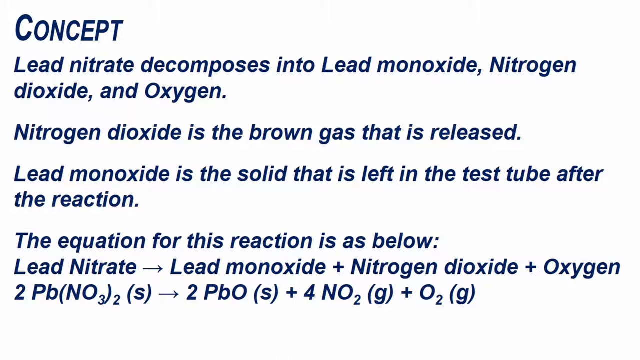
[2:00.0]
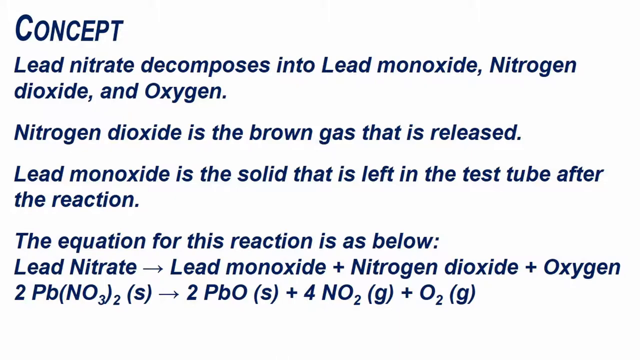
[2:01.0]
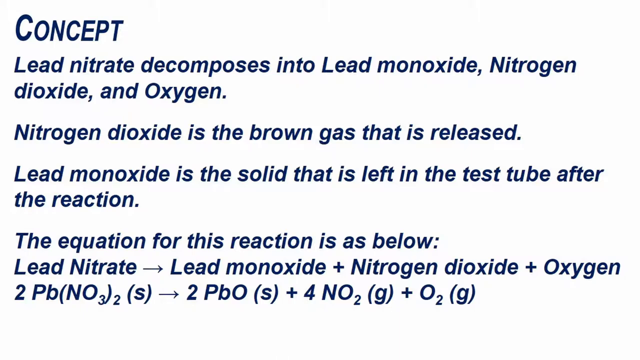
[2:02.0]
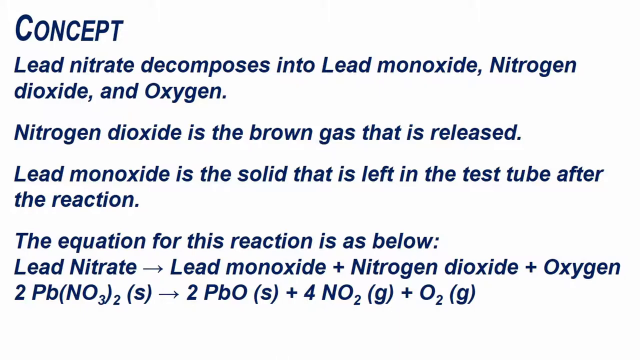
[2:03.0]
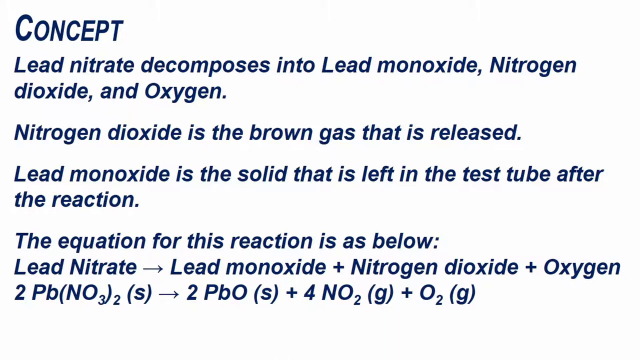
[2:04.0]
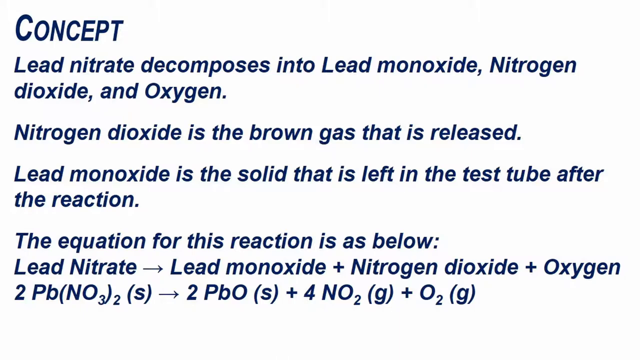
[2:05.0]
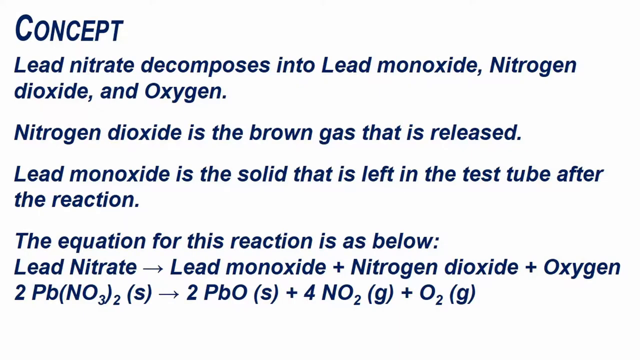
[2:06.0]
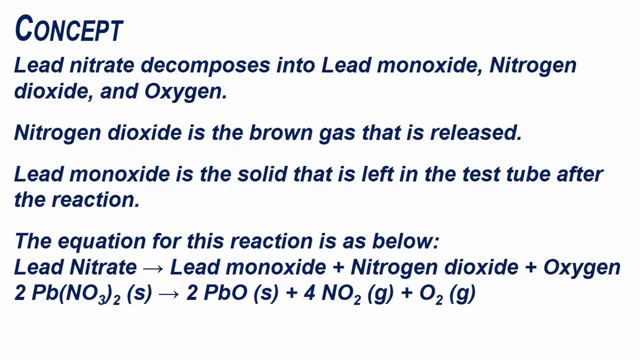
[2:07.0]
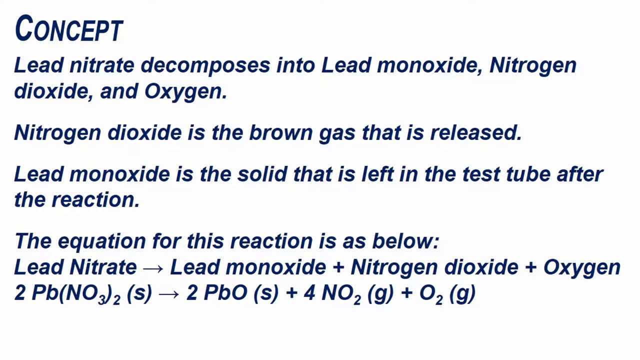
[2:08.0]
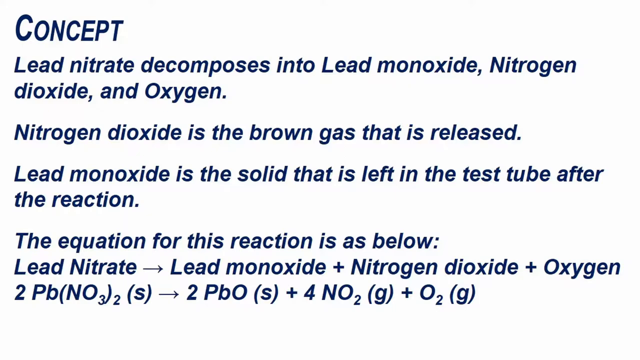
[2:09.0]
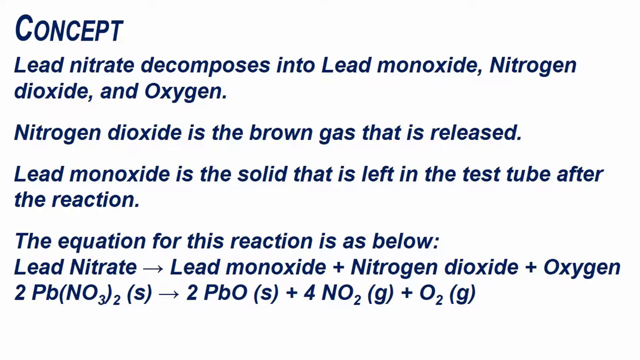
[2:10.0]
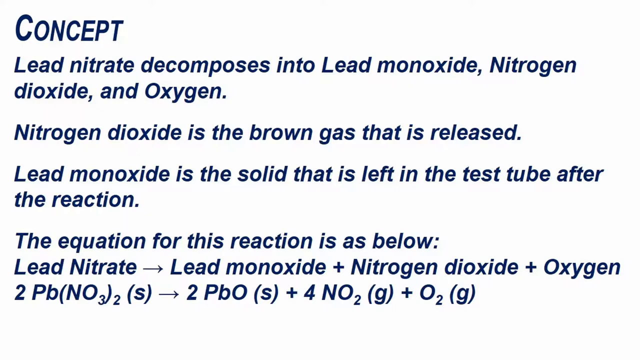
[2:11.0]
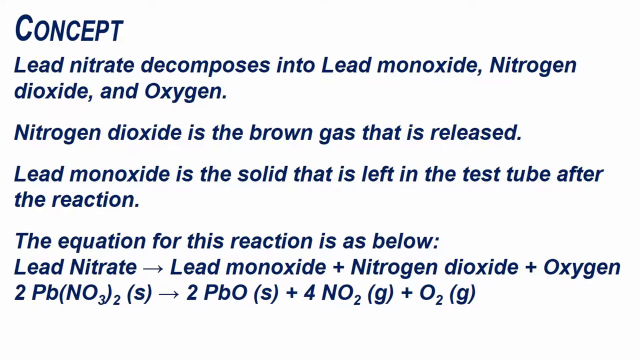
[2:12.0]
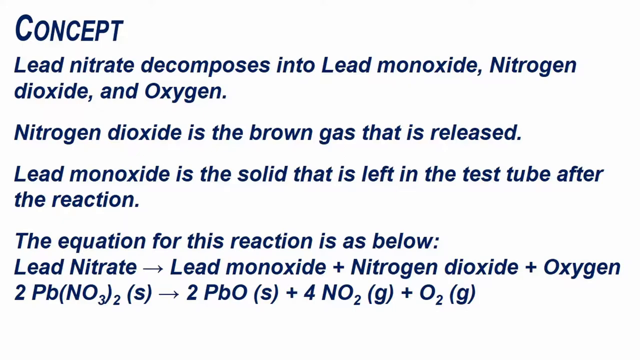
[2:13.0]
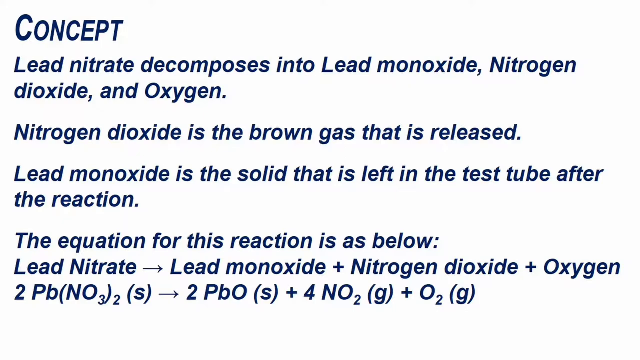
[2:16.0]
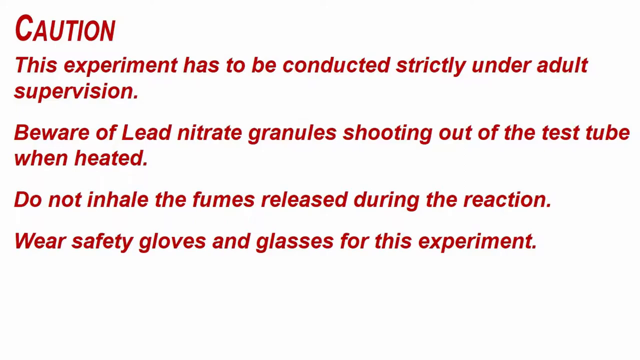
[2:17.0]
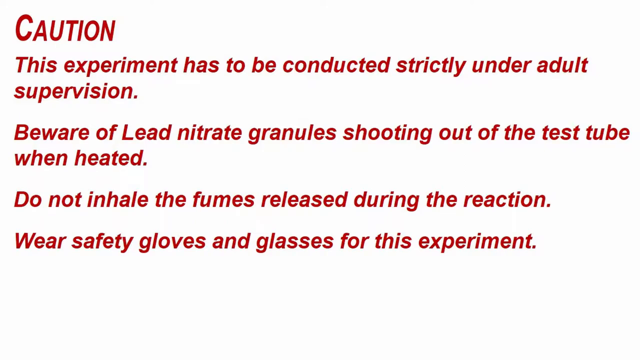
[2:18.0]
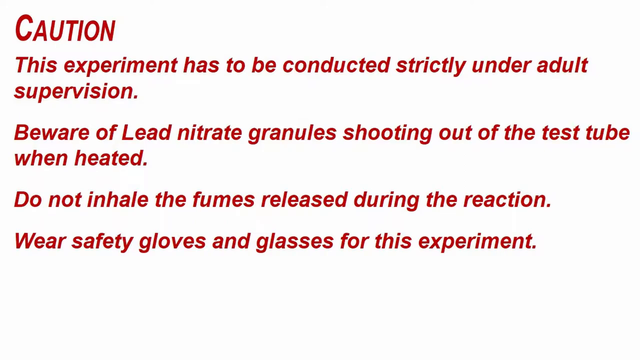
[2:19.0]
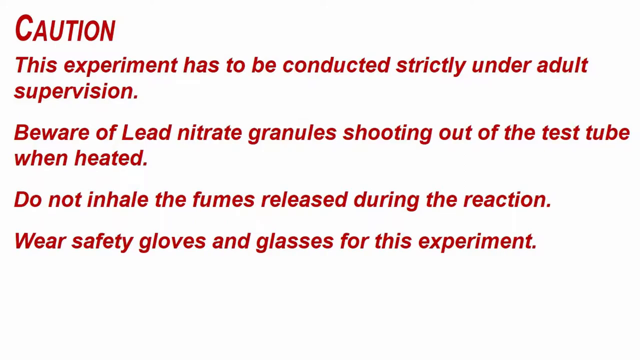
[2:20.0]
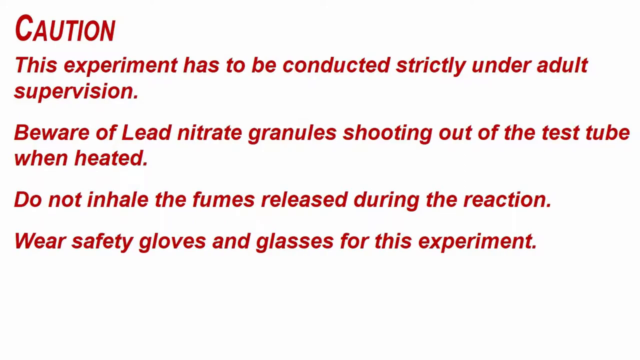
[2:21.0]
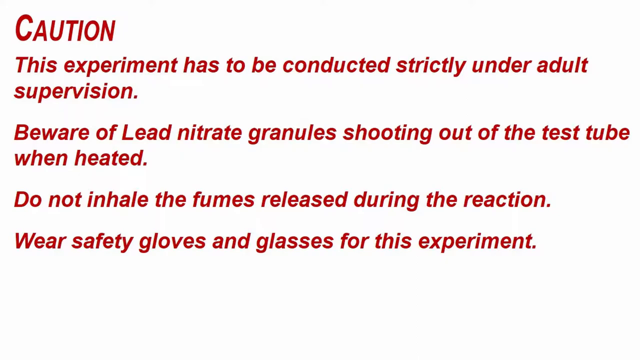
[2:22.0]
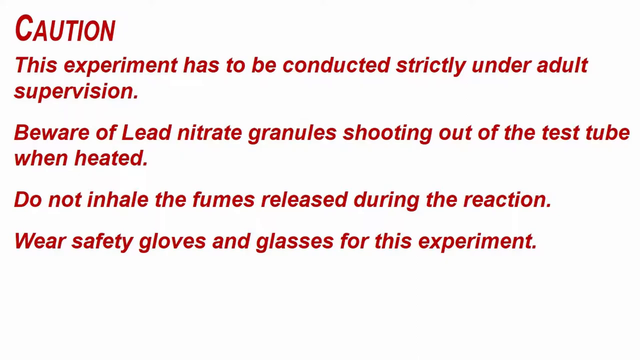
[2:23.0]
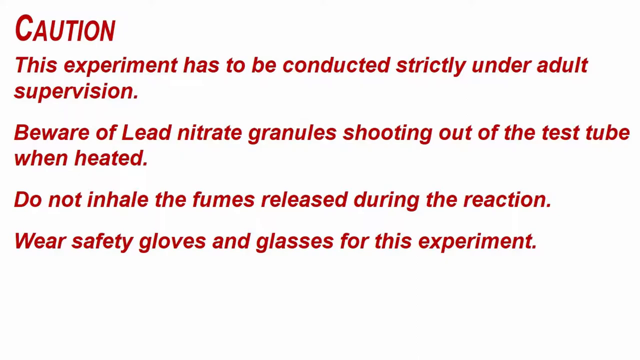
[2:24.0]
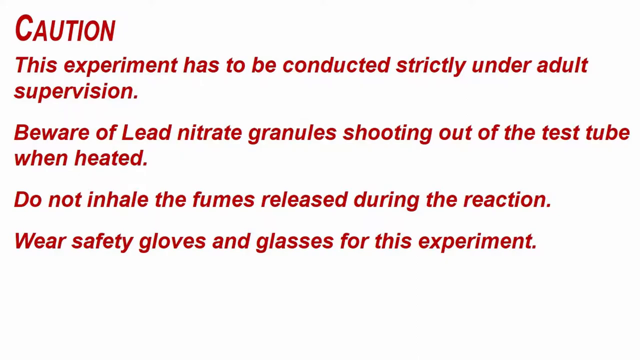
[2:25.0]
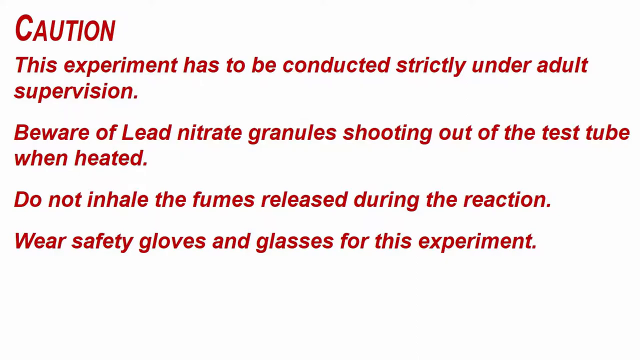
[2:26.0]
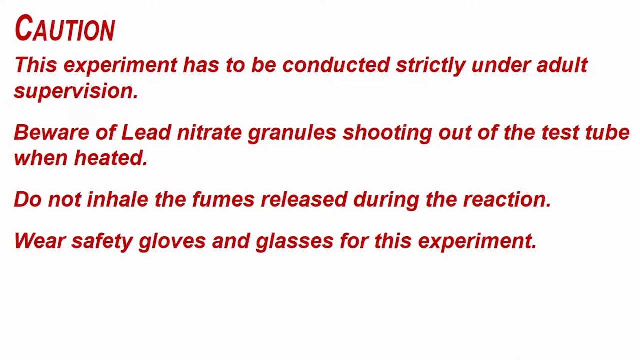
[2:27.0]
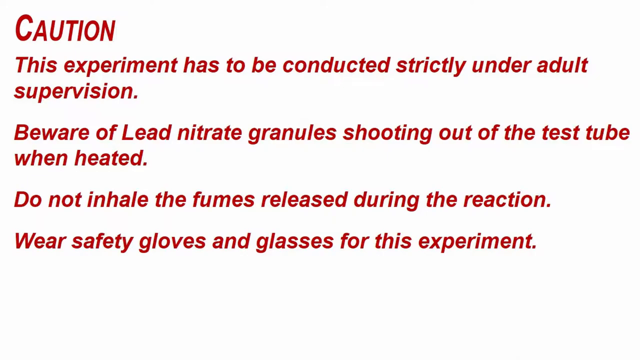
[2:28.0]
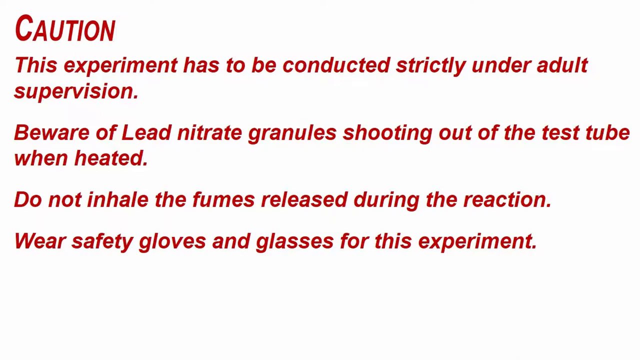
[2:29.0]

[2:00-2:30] Blue text on a white background takes up the entire screen and reads: "Concept. Lead nitrate decomposes into lead monoxide, nitrogen dioxide, and oxygen. Nitrogen dioxide is the brown gas that is released. Lead monoxide is the solid that is left in the test tube after the reaction. The equation for this reaction is as below: Lead nitrate to lead monoxide plus nitrogen dioxide plus oxygen." Below it, a formula is shown in letters and numbers in parentheses. The text then changes to red and reads: "Caution, this experiment has to be conducted strictly under adult supervision. Beware of lead nitrate granules shooting out of the test tube when heated. Do not inhale the fumes released during the reaction. Wear safety gloves and glasses for this experiment." This stays on screen for several more seconds.